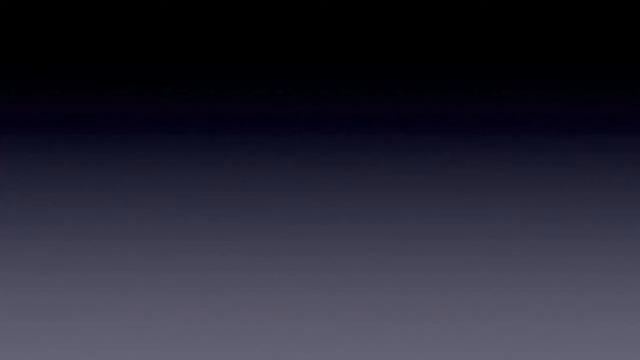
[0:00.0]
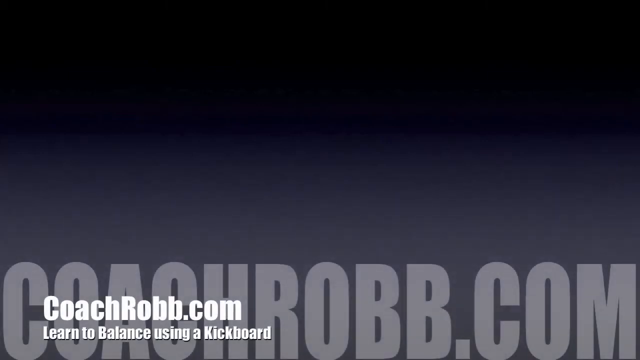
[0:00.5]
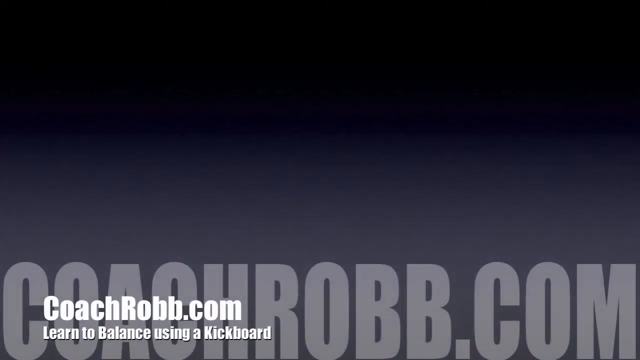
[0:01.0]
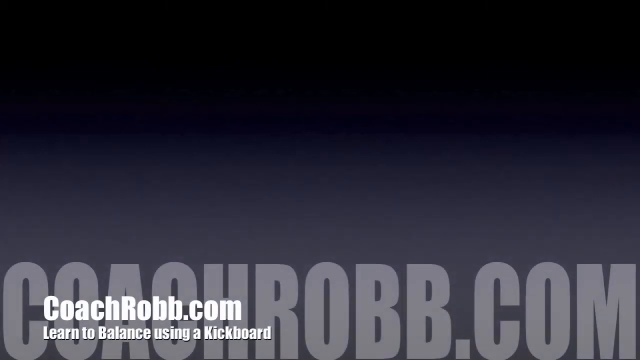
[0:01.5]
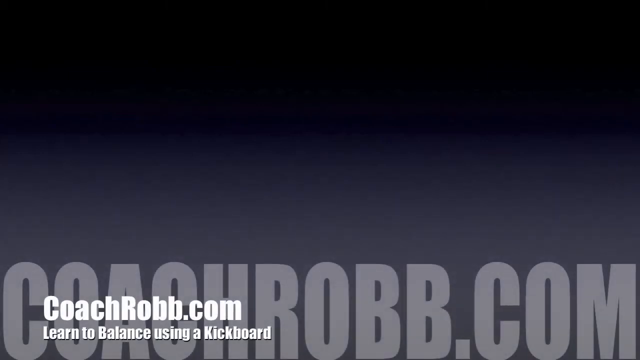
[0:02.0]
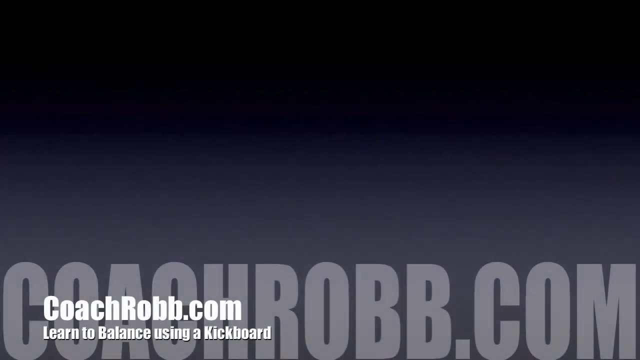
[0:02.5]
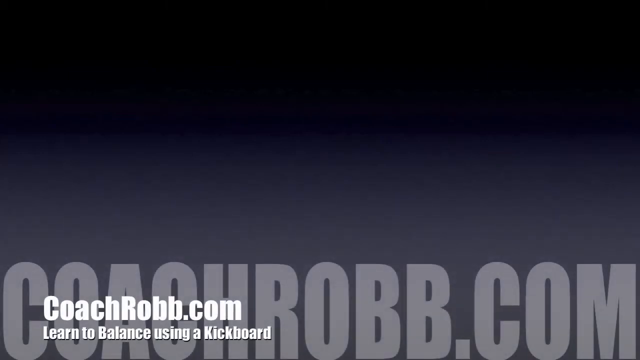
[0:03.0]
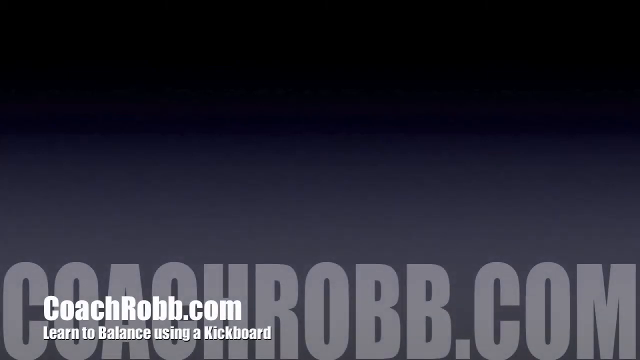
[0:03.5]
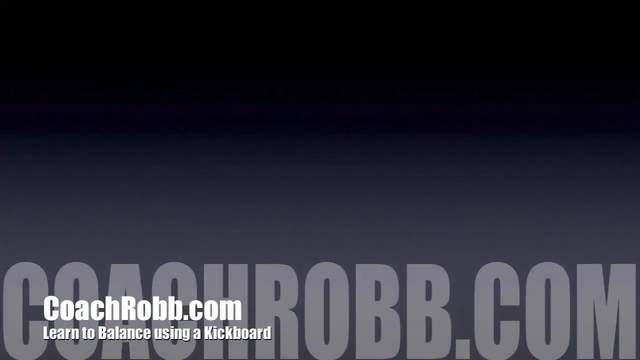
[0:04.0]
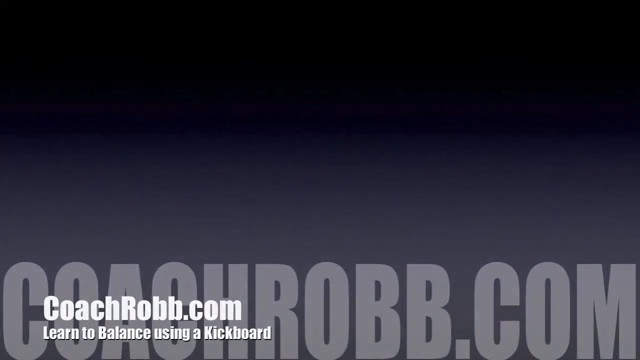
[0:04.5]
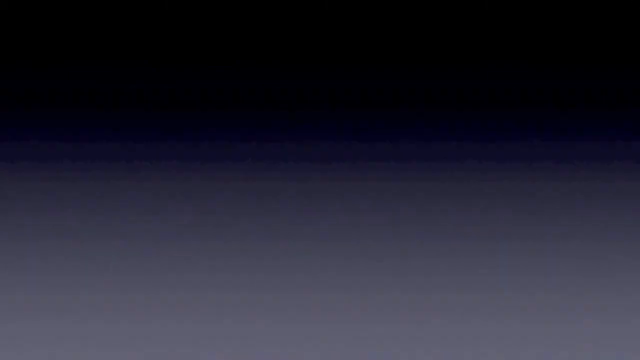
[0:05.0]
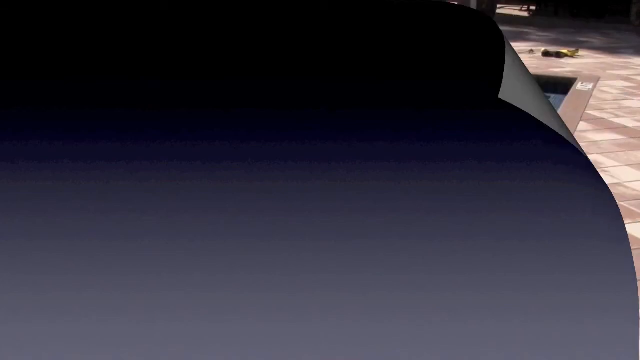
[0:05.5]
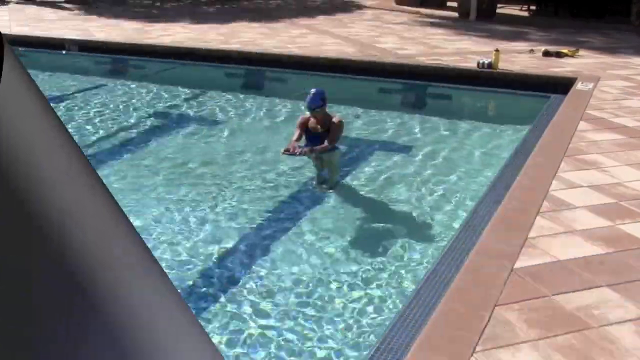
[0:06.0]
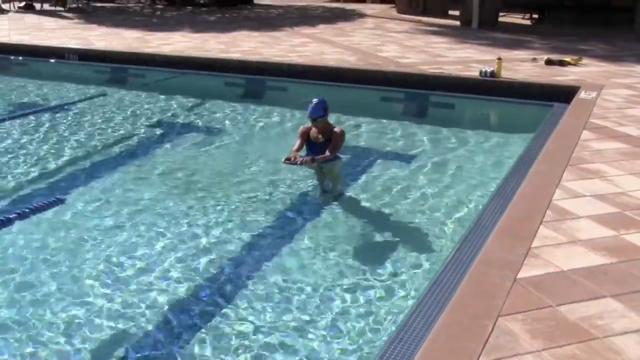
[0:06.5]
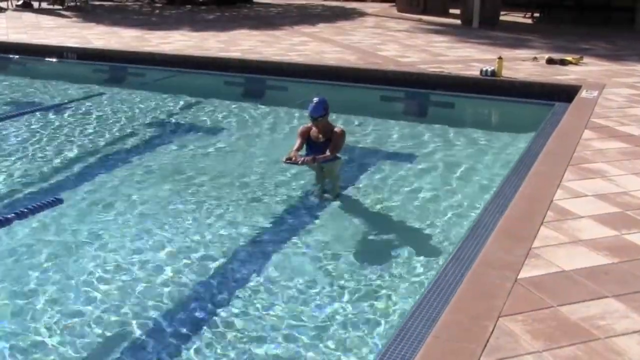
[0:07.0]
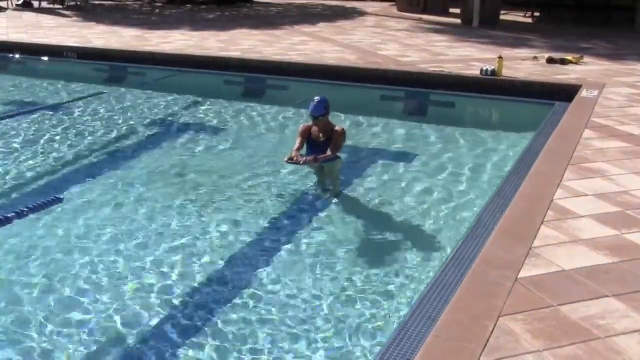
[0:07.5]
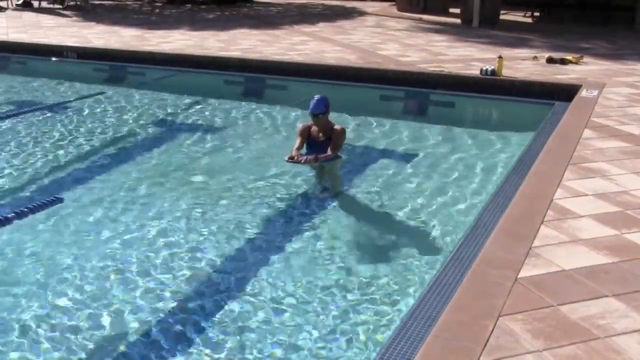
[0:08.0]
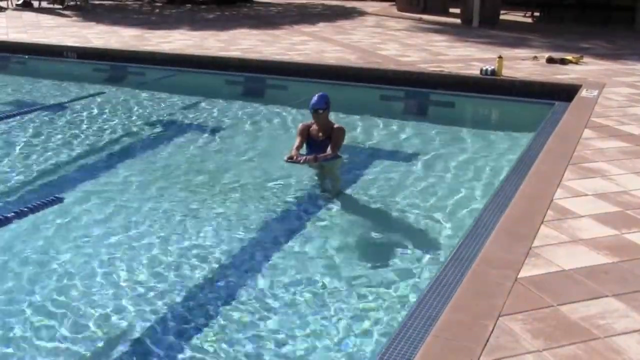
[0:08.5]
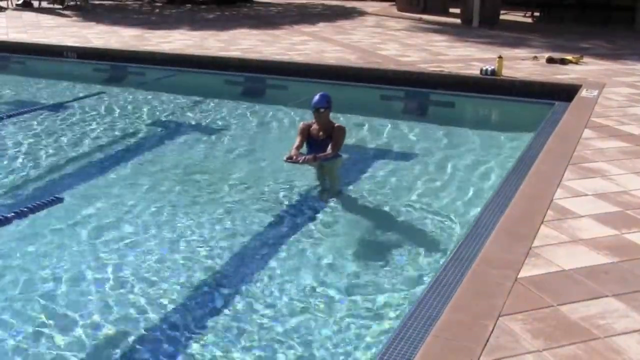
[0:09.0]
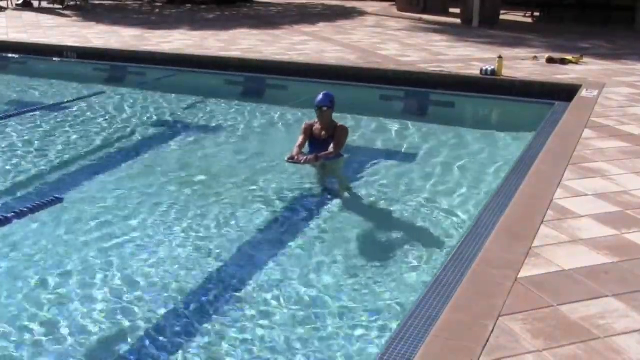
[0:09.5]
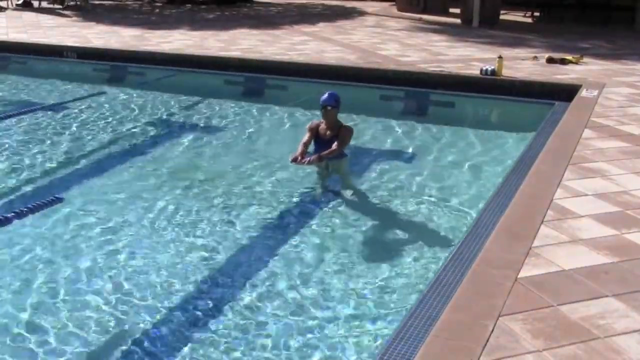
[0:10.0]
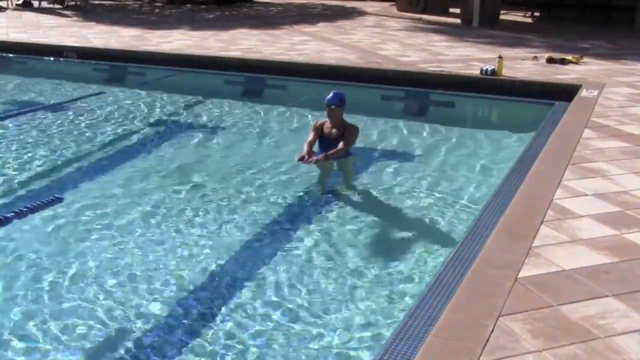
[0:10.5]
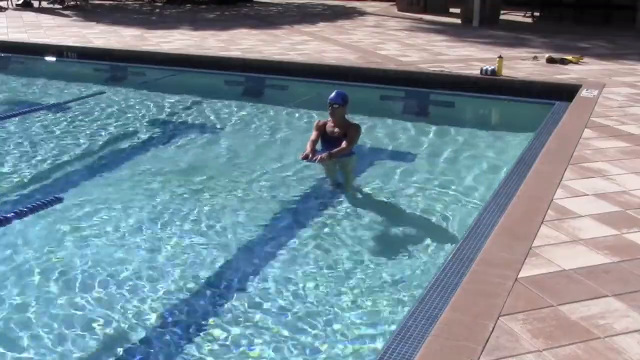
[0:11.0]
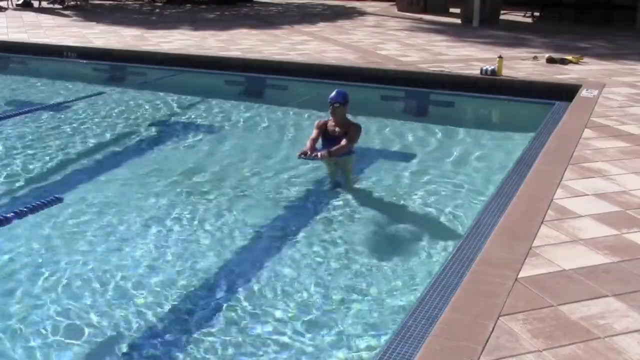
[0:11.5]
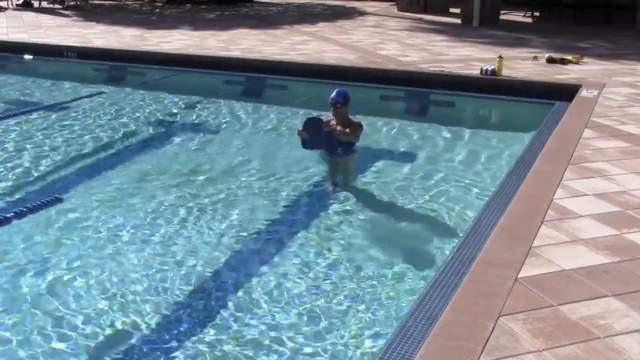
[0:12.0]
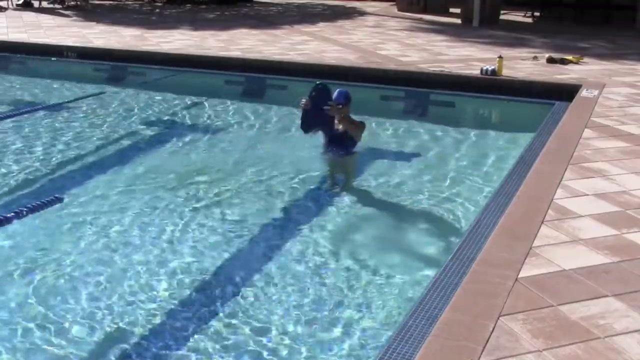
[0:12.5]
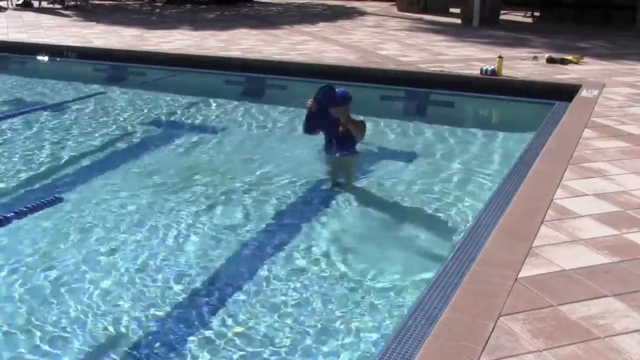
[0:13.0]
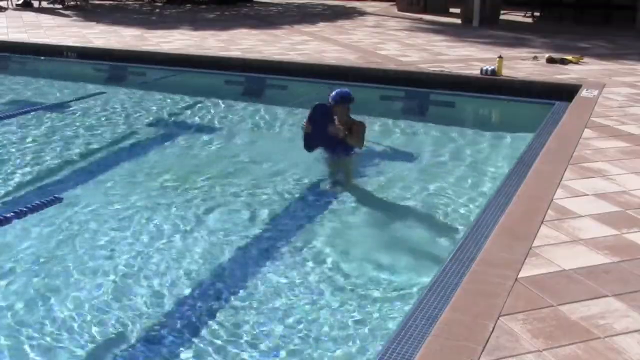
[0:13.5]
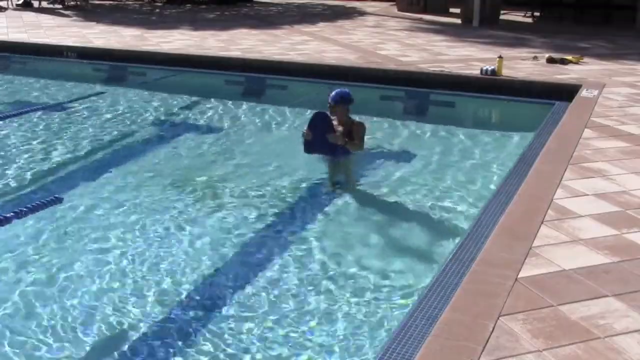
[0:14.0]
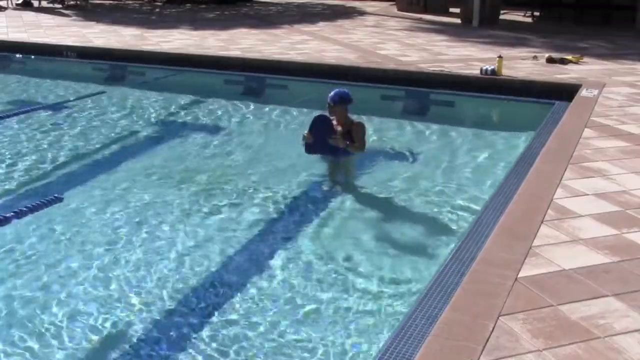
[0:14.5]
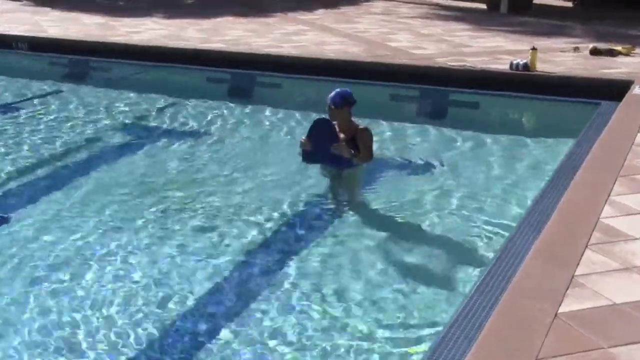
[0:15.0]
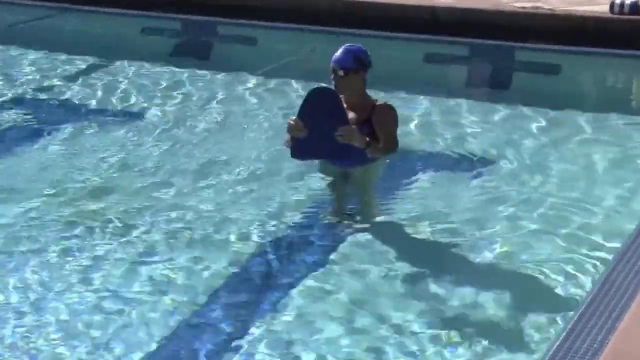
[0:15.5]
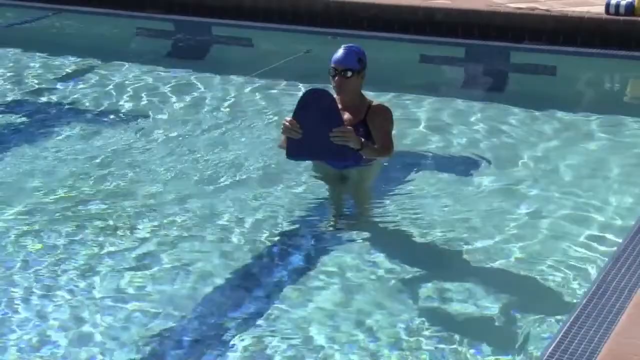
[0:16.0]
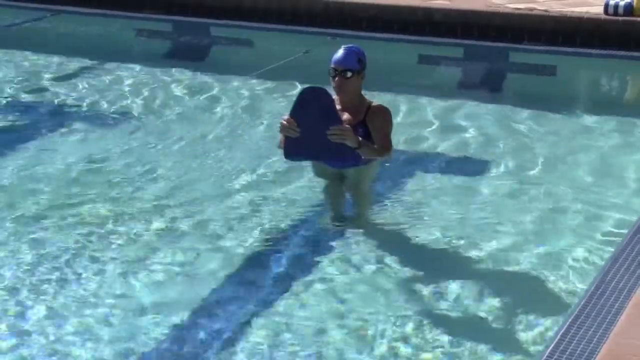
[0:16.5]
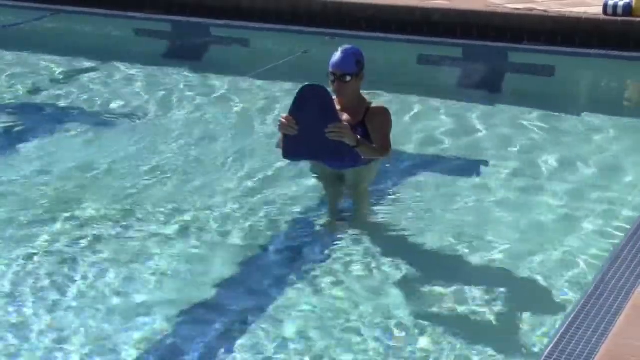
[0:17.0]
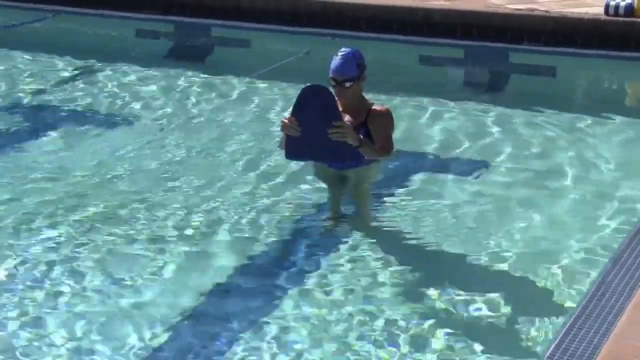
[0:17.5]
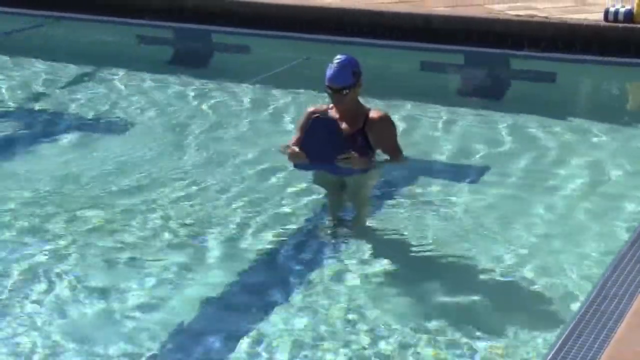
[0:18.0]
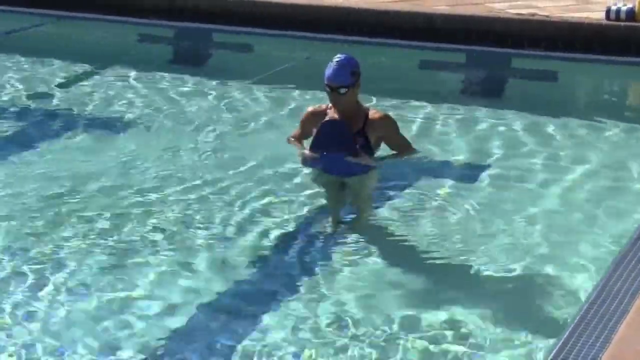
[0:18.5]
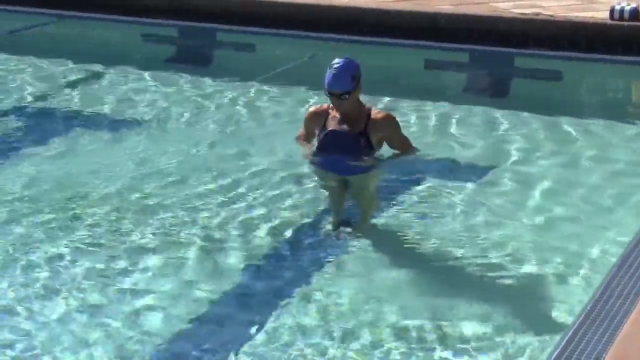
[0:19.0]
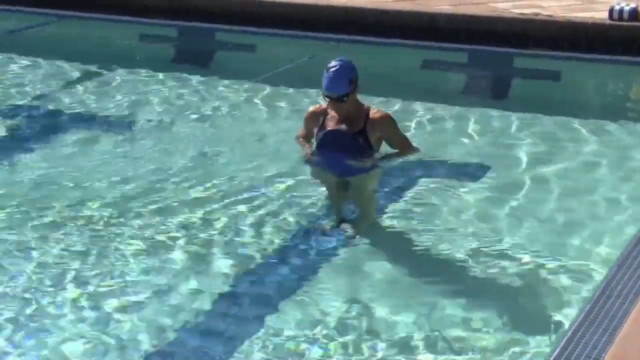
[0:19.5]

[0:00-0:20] A person uses a device, possibly an assistive device, to stabilize himself at the water pool while learning to balance.